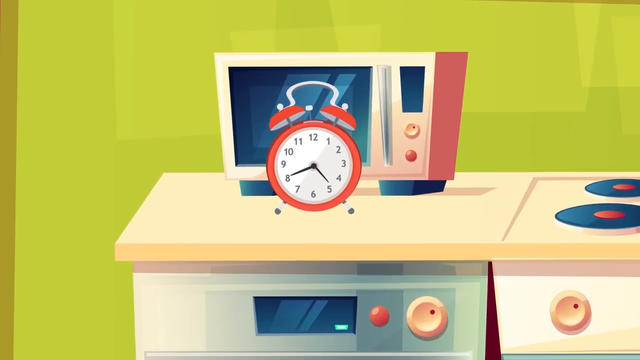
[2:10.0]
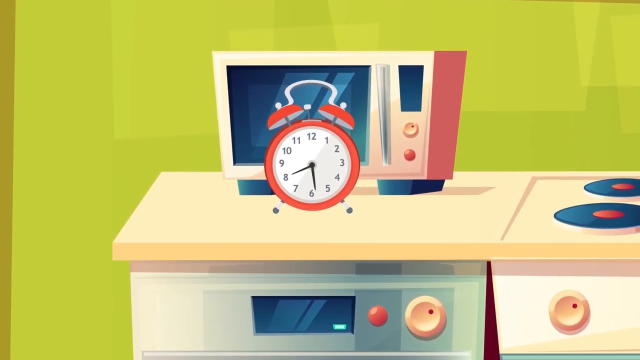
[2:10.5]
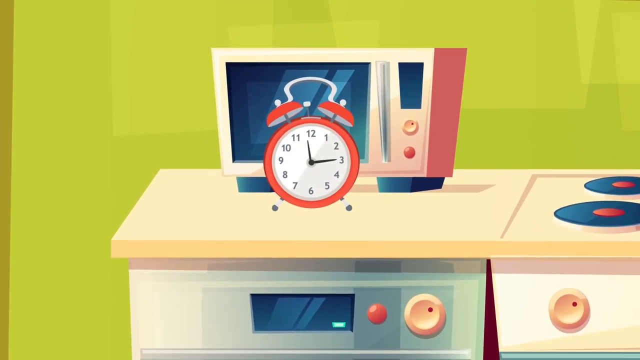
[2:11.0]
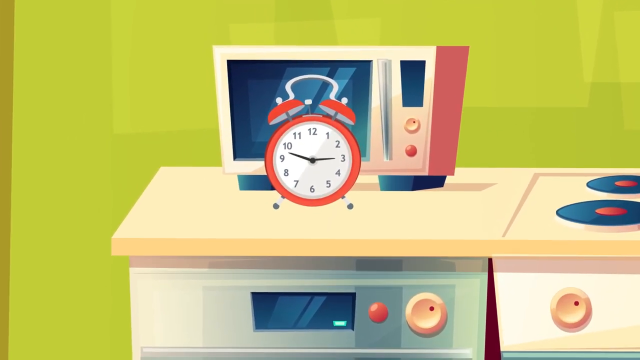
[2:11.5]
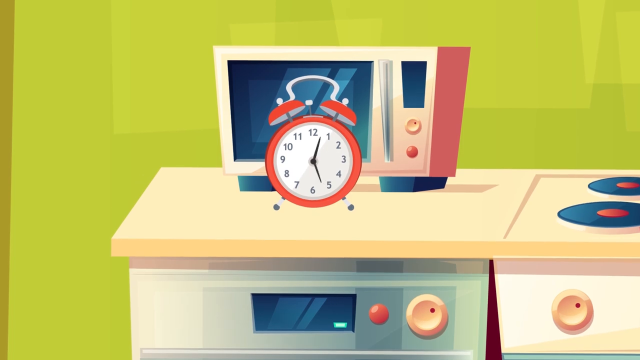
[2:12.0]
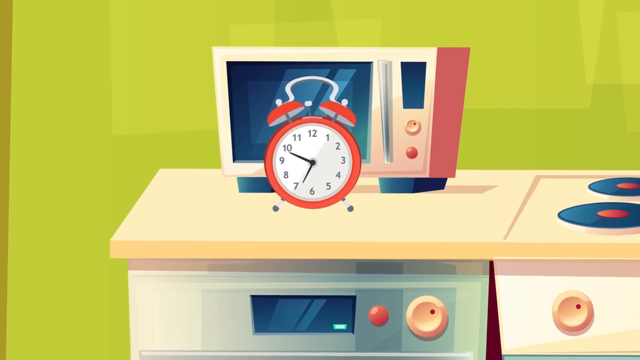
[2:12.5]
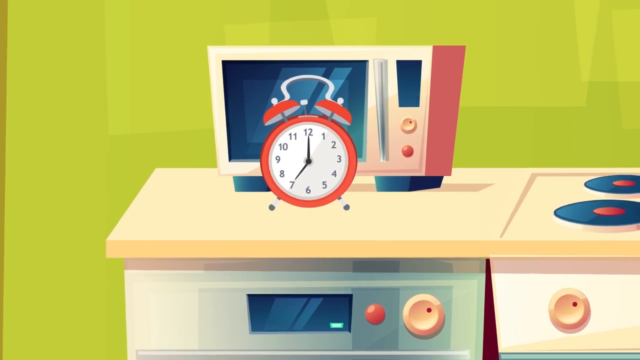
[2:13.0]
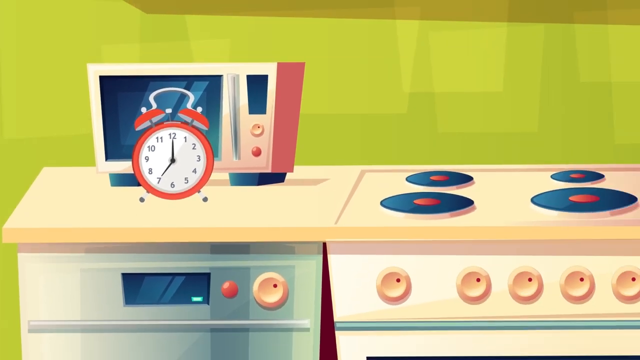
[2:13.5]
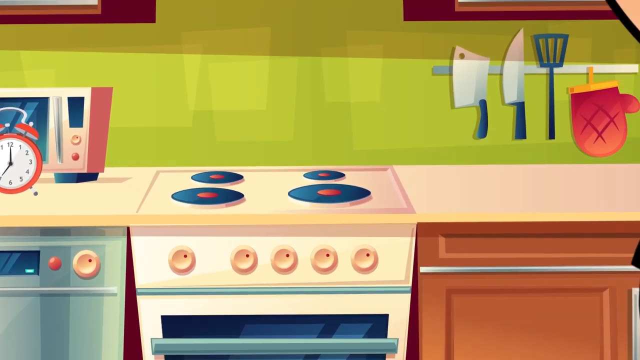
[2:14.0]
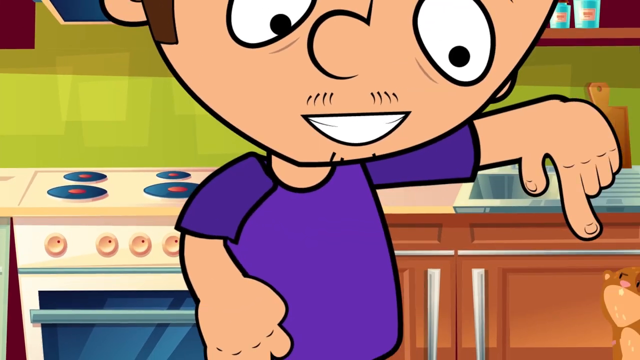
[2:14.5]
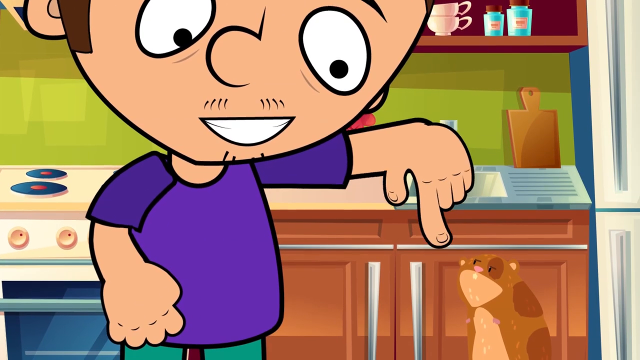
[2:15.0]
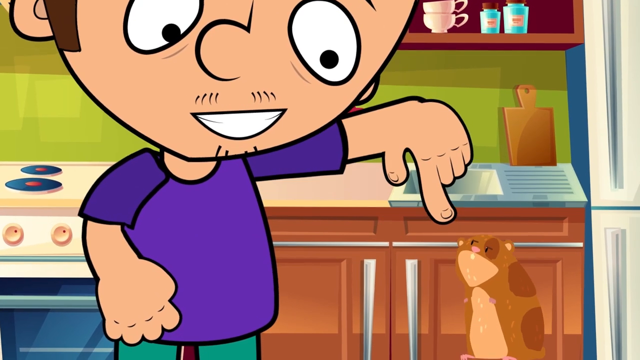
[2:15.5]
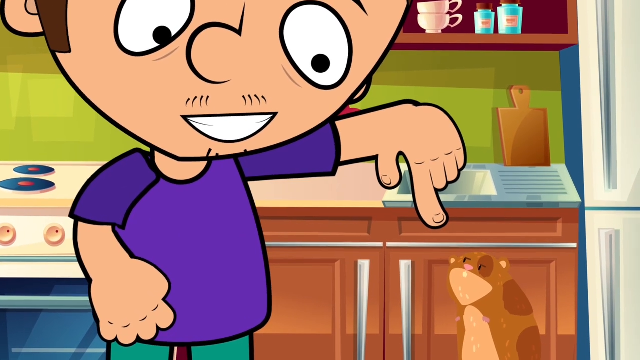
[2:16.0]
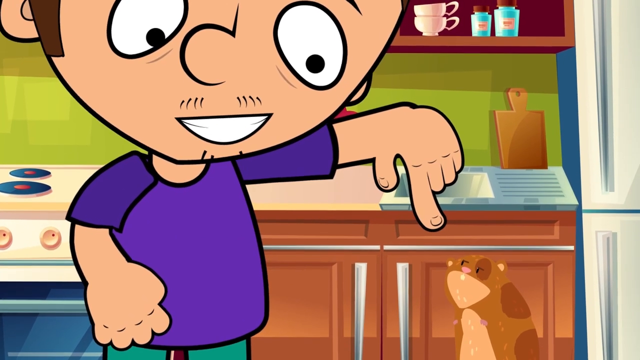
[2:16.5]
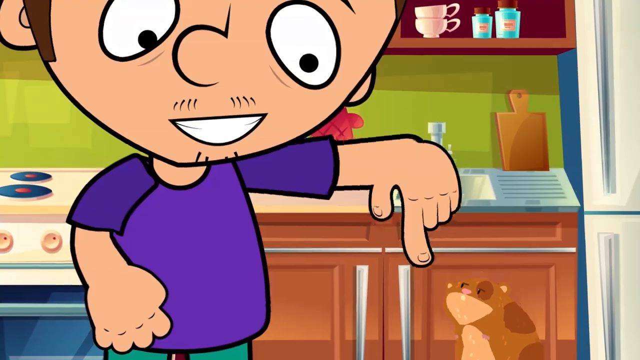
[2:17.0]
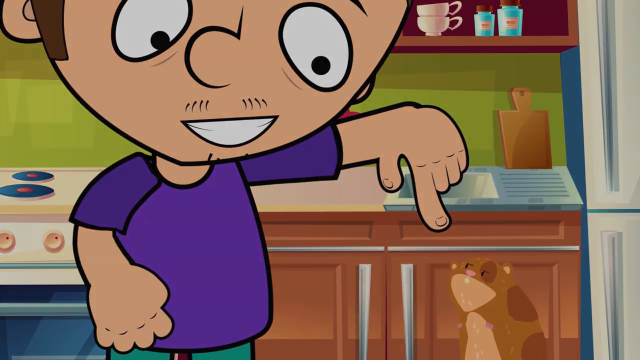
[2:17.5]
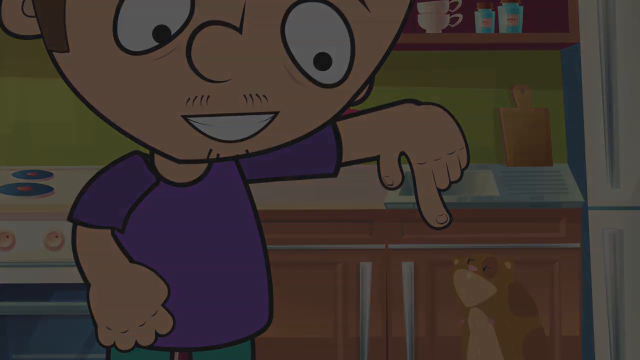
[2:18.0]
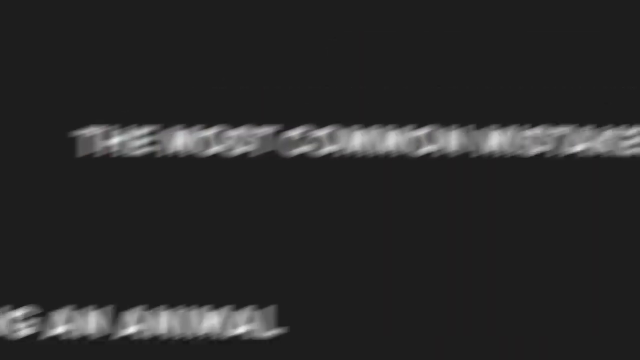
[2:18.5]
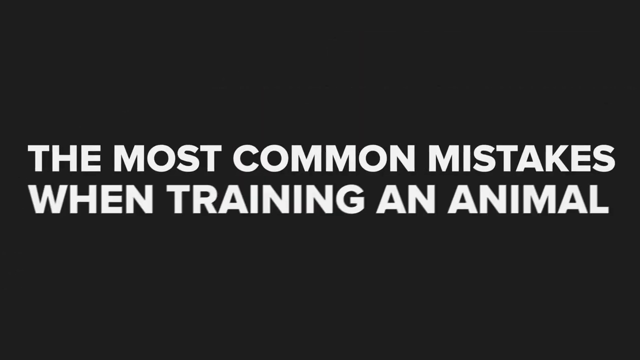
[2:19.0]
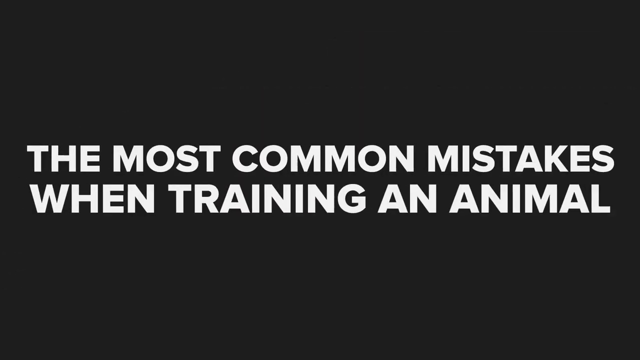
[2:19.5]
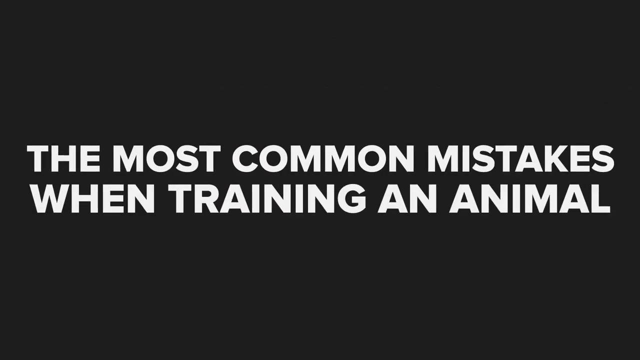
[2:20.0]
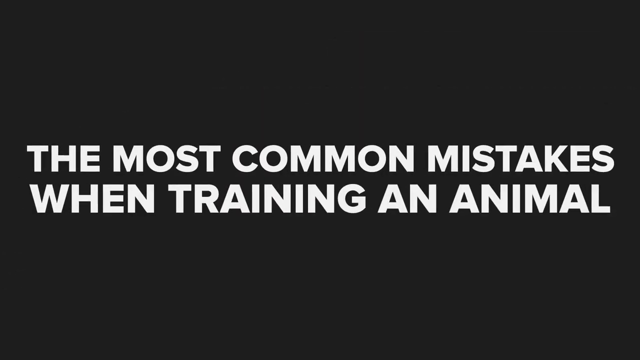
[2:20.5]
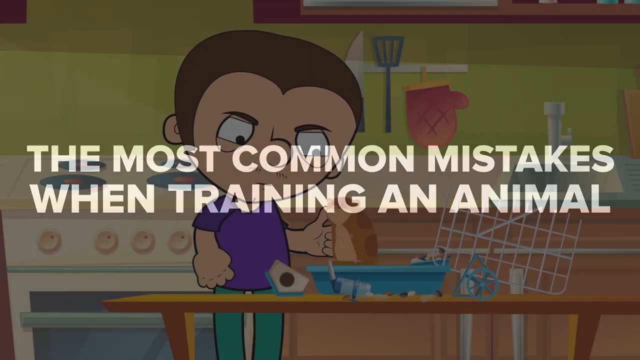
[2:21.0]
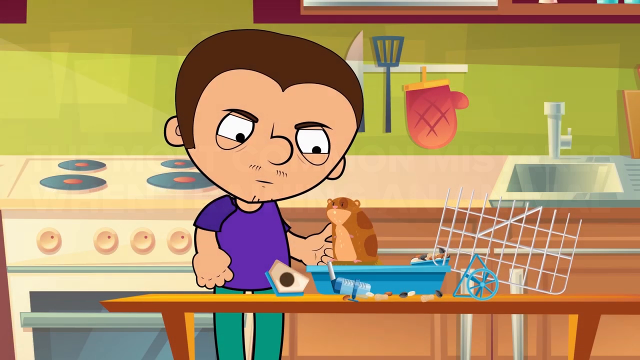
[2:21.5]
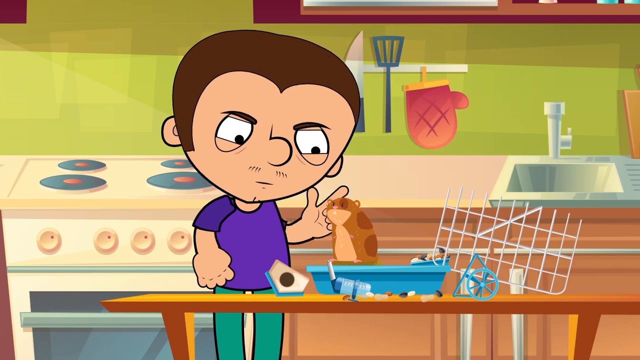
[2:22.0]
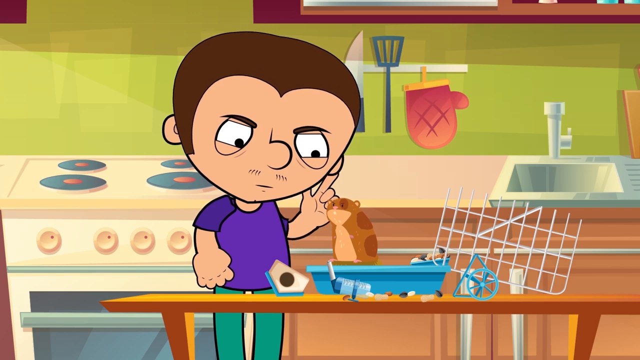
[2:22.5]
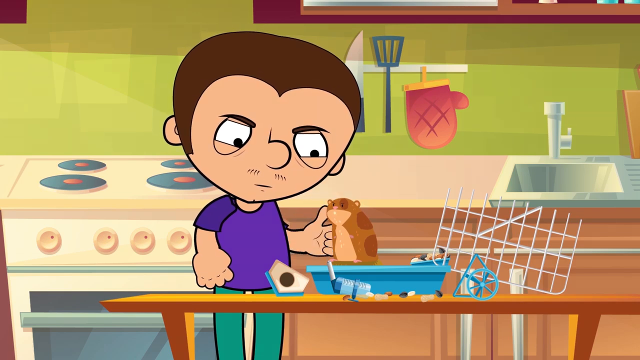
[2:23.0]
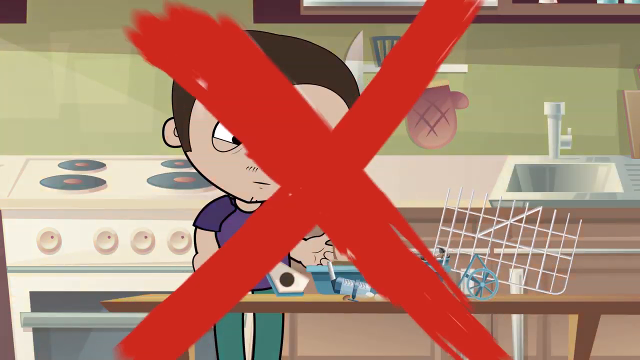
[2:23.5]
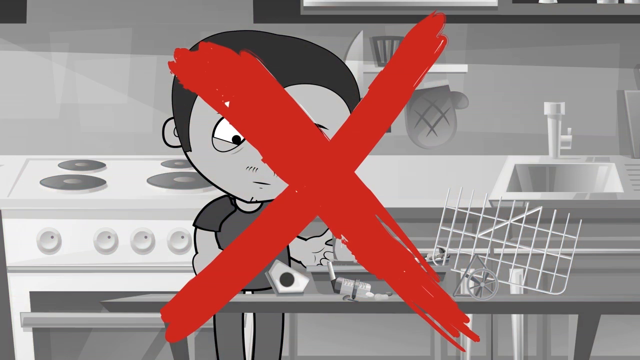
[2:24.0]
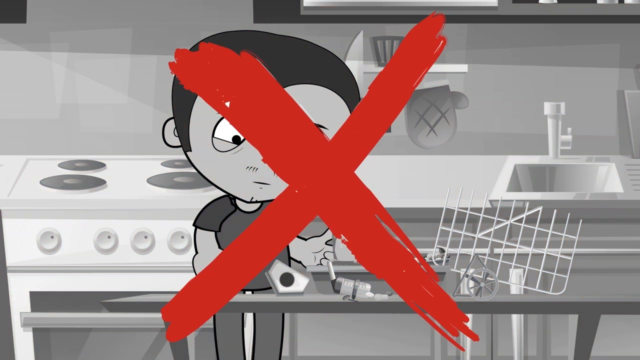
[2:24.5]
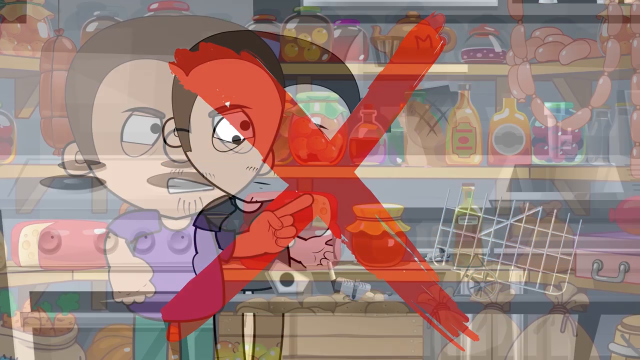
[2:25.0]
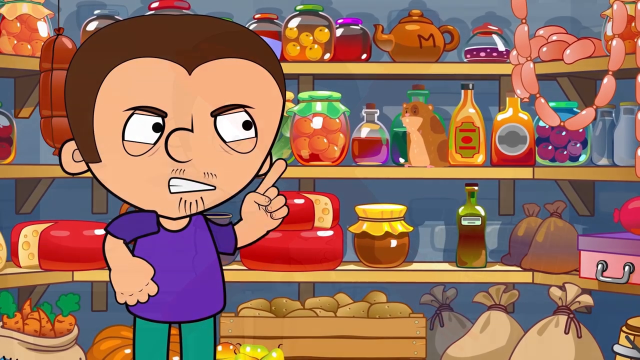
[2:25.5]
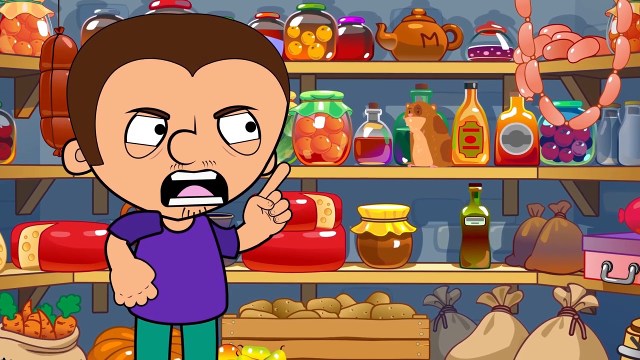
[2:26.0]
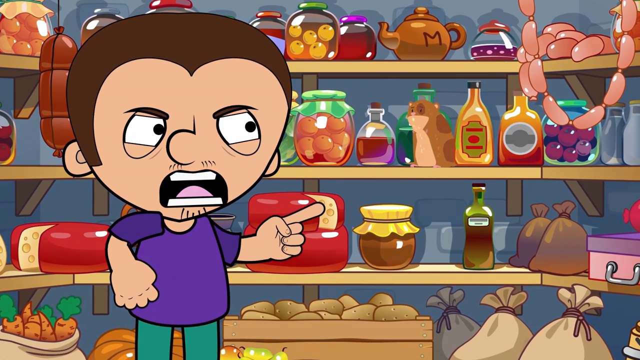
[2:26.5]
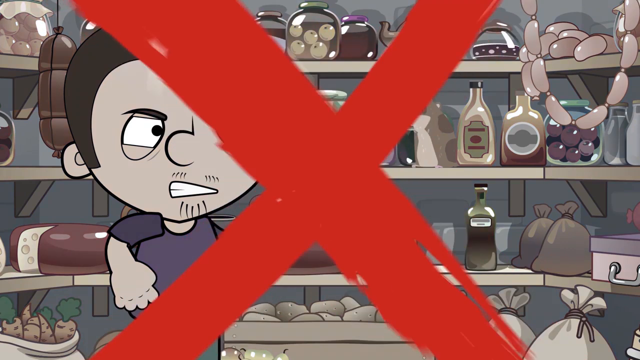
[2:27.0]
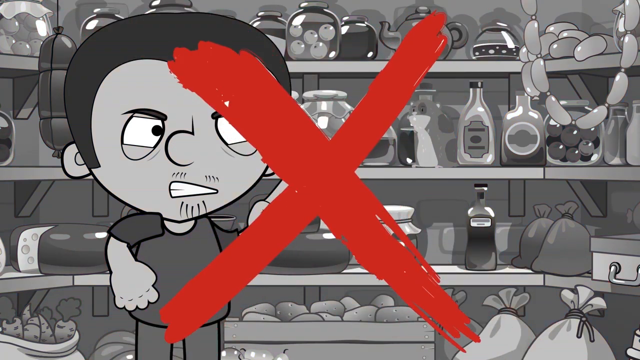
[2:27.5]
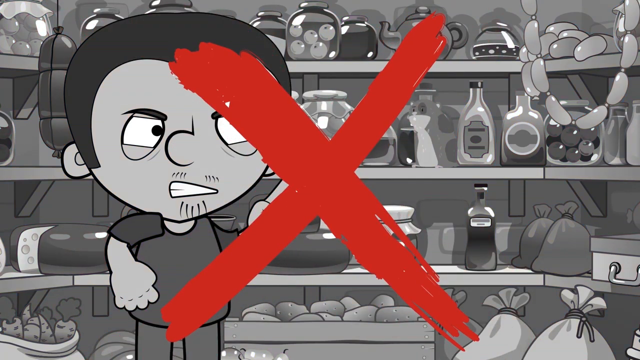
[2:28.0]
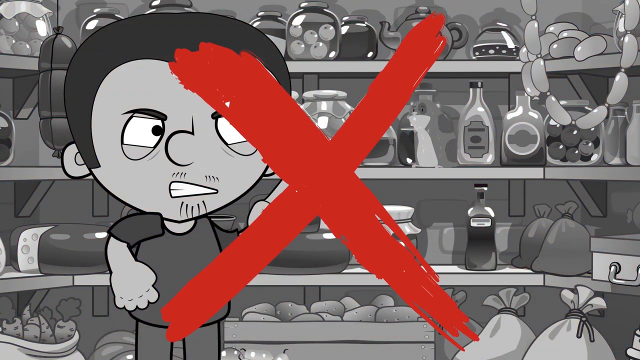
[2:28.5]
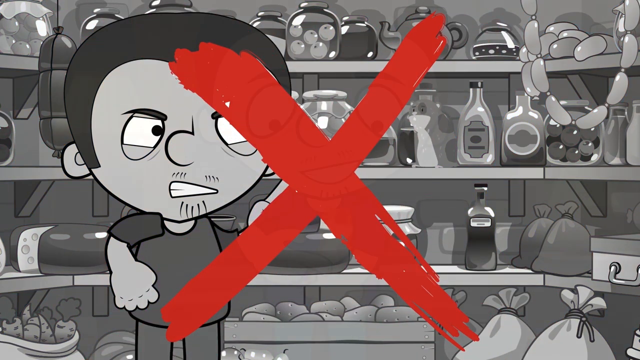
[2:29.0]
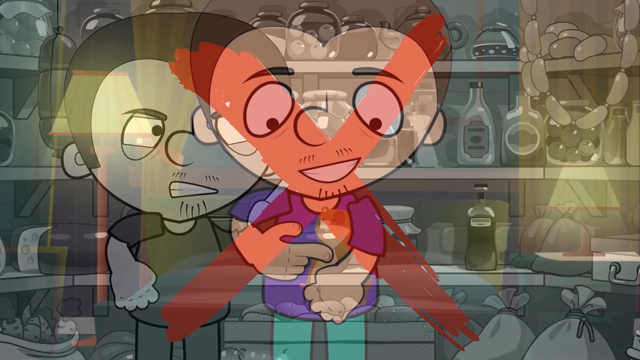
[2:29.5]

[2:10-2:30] The clock hands spin wildly, slow down and stop on 7:00. The view zooms to the male character, happy and smiling, pointing his left index finger up and down toward the hamster, which tries to jump each time to follow his hand. An on-screen title reads "The most common mistakes when training an animal". The man then scolds the hamster in the kitchen, appearing angry and moving his left index finger disapprovingly at it, and a red X appears on the screen. In another scene he is in the pantry, scolding the hamster and pointing with his left index finger; the hamster appears to be hiding behind food.